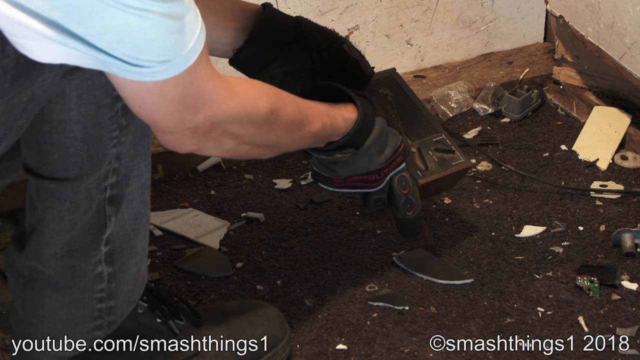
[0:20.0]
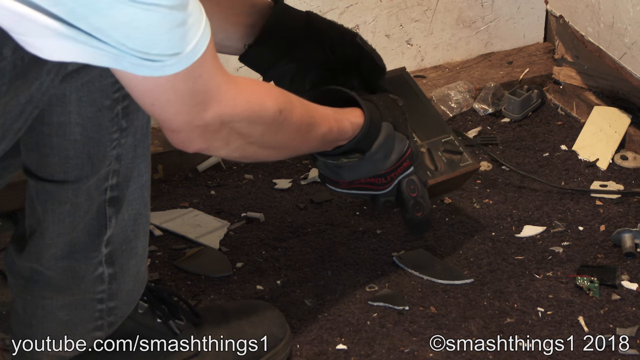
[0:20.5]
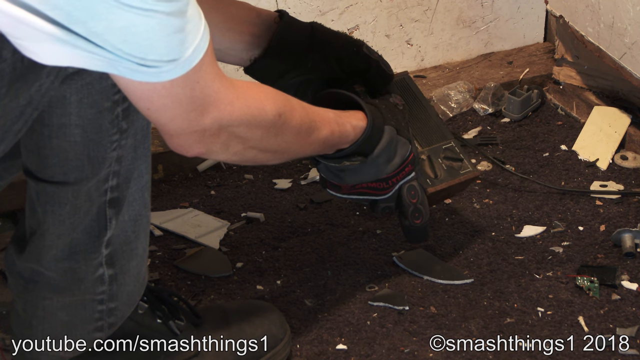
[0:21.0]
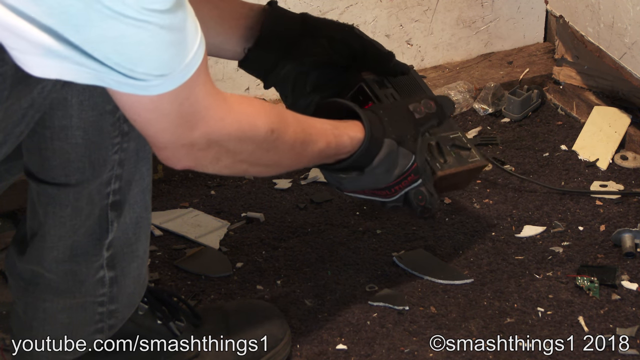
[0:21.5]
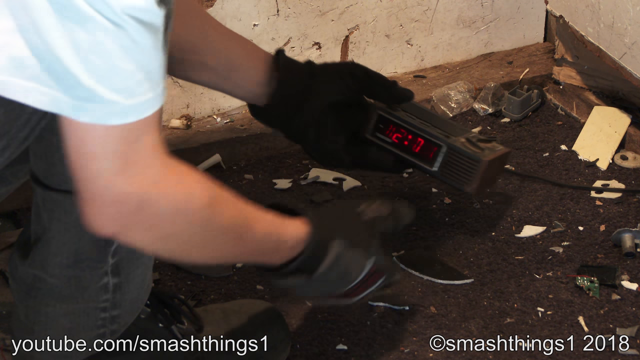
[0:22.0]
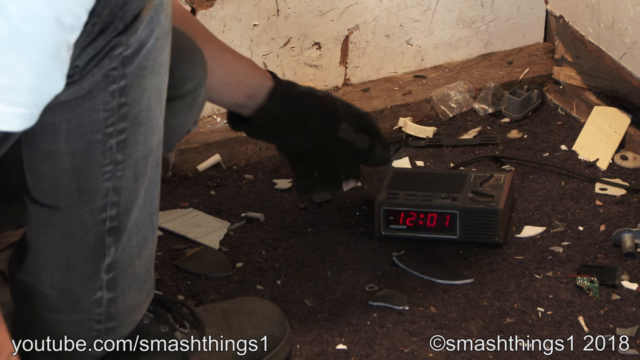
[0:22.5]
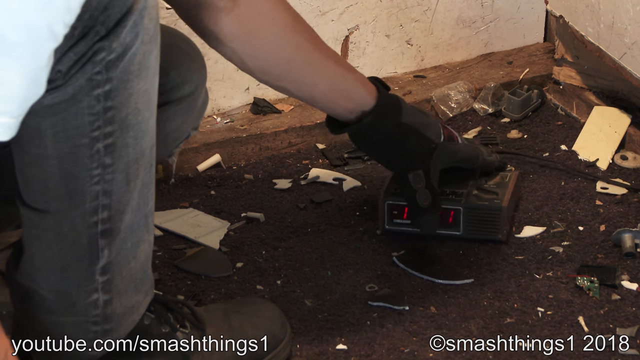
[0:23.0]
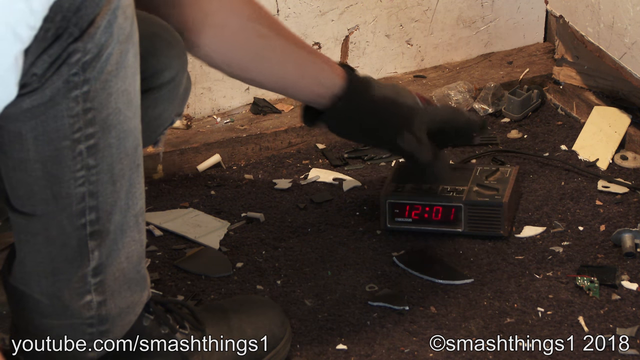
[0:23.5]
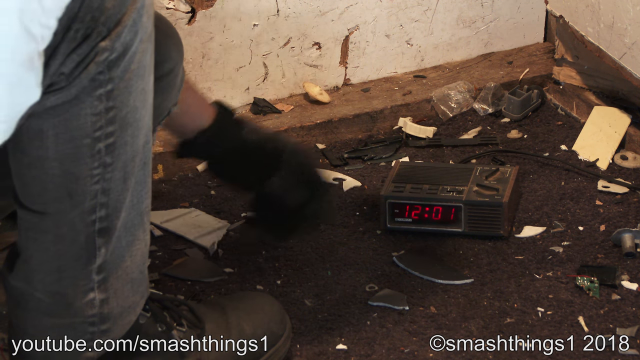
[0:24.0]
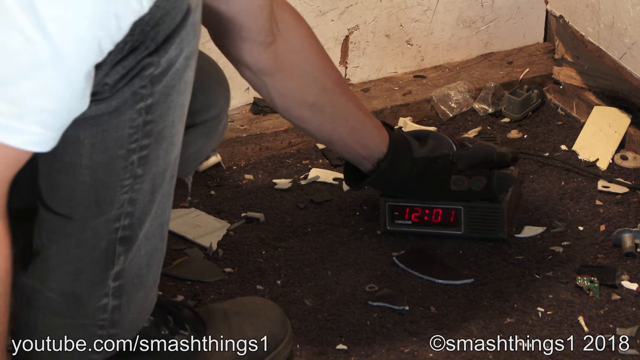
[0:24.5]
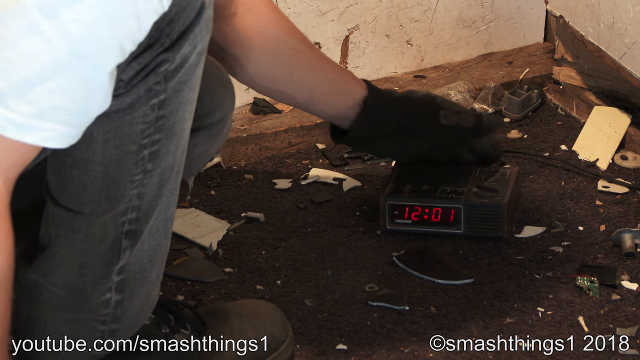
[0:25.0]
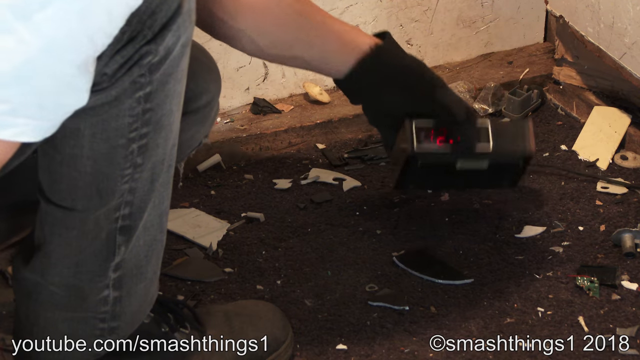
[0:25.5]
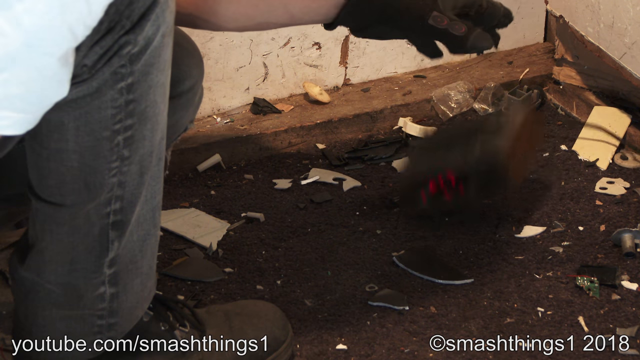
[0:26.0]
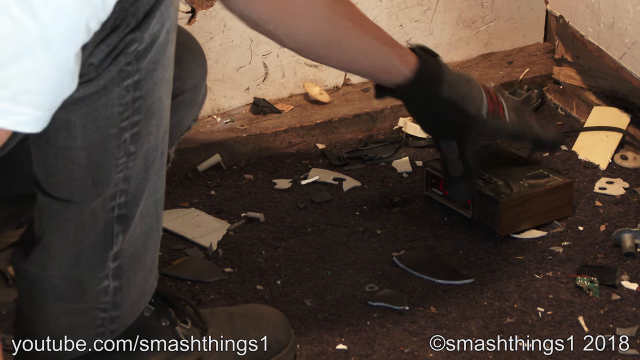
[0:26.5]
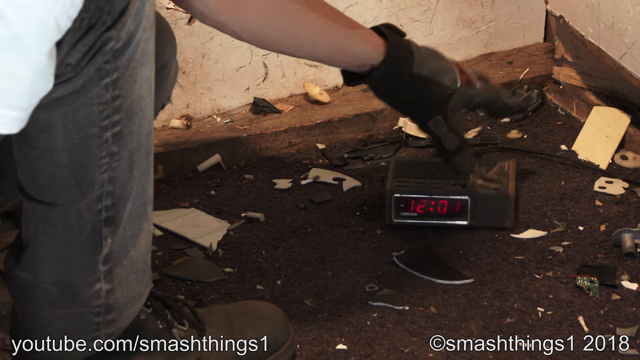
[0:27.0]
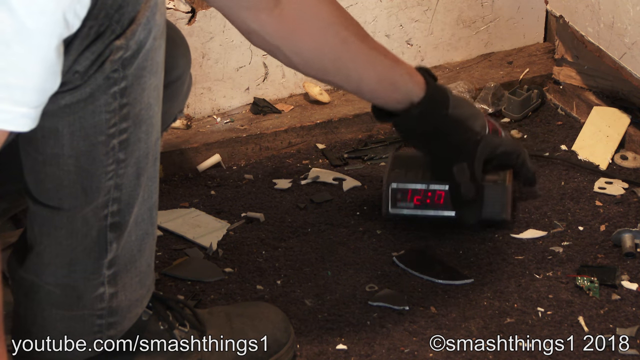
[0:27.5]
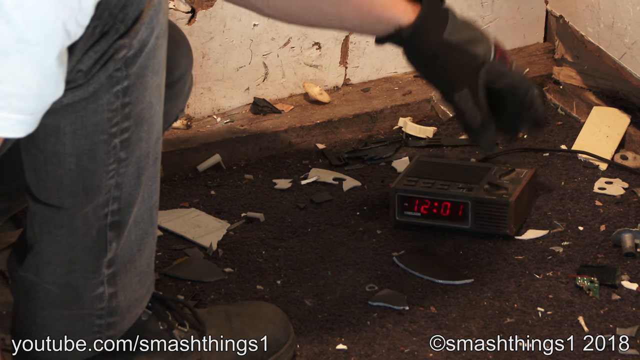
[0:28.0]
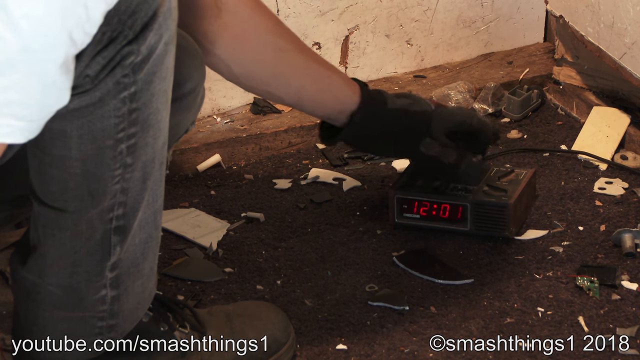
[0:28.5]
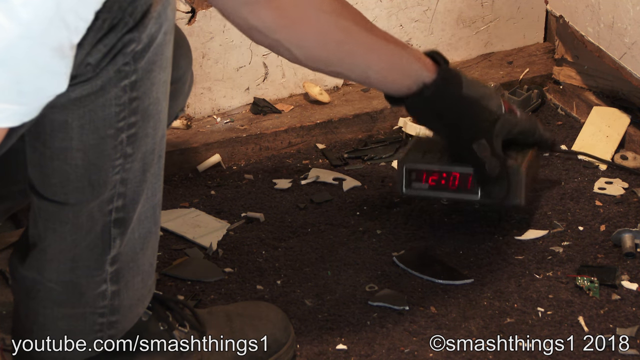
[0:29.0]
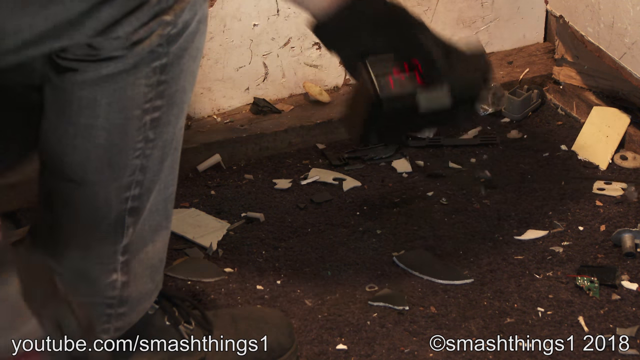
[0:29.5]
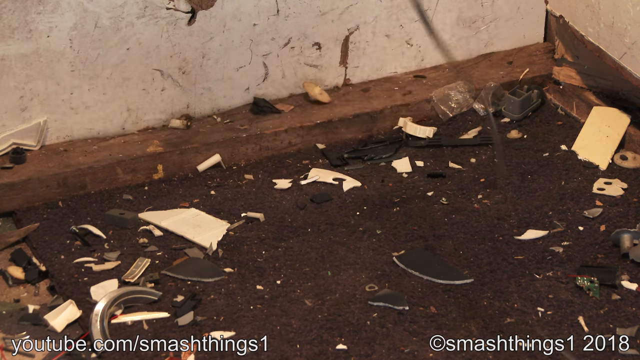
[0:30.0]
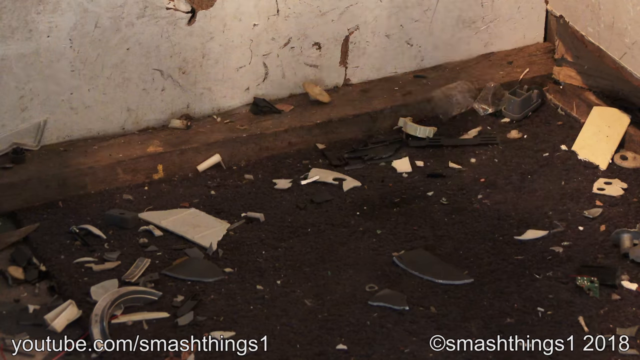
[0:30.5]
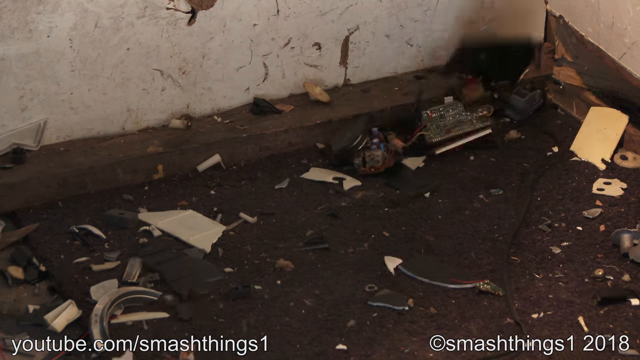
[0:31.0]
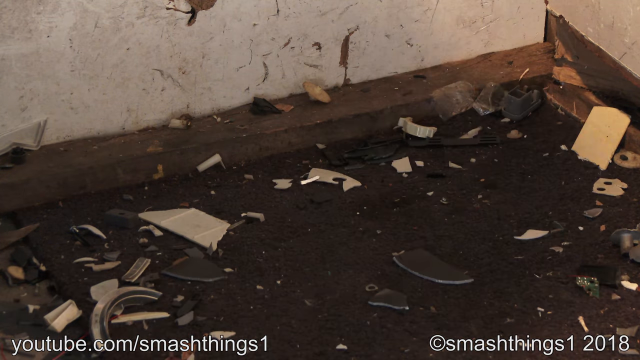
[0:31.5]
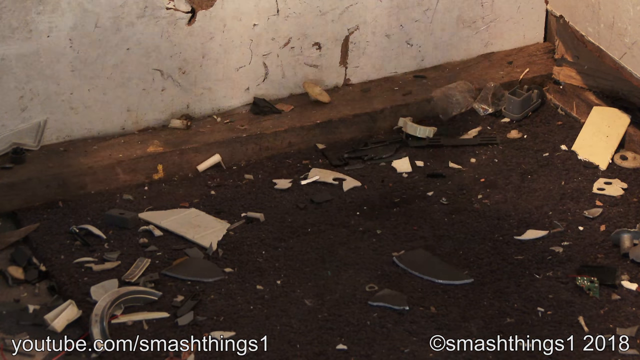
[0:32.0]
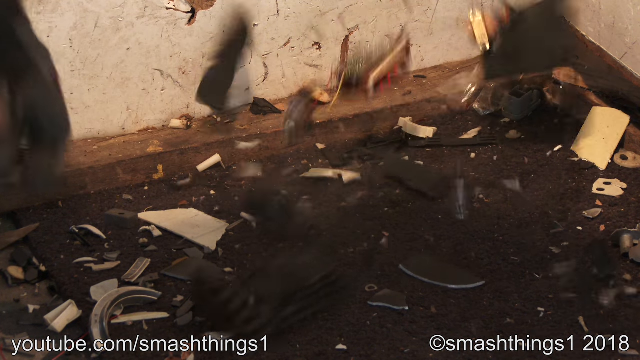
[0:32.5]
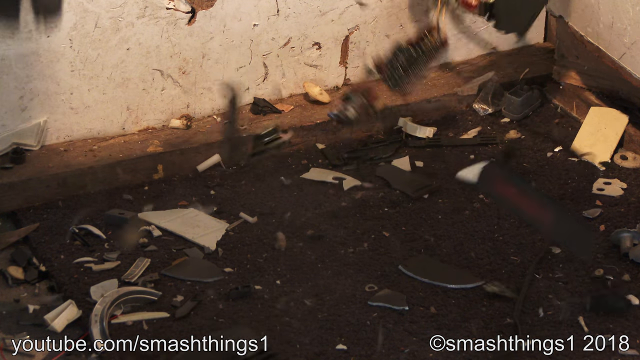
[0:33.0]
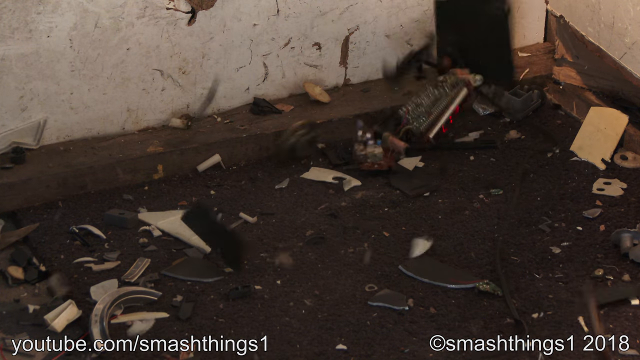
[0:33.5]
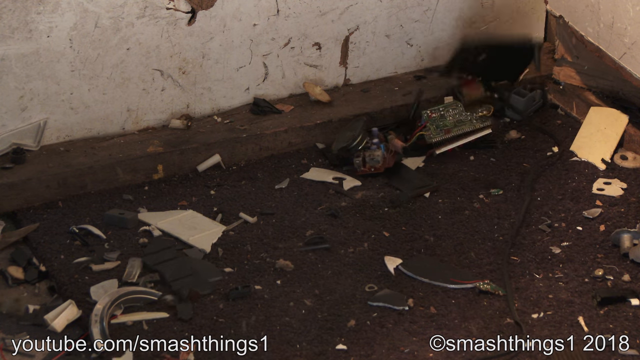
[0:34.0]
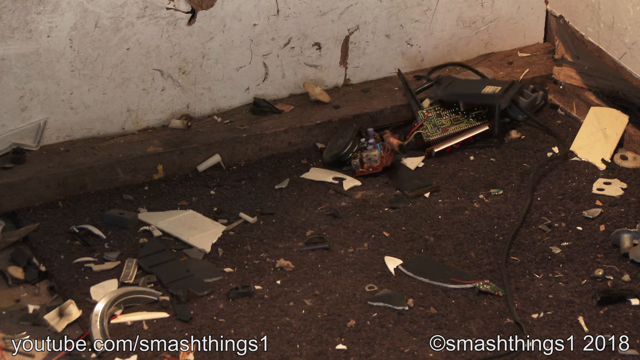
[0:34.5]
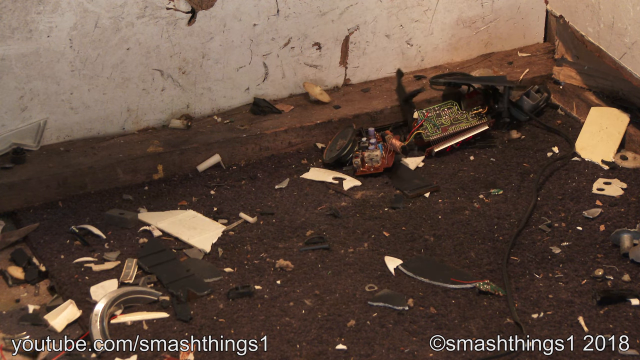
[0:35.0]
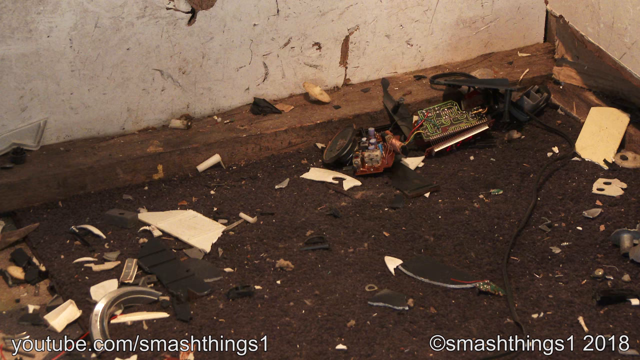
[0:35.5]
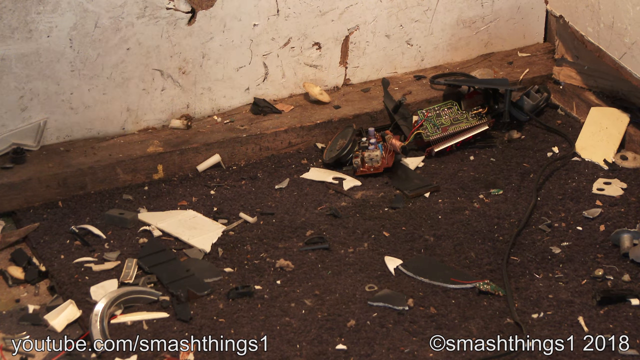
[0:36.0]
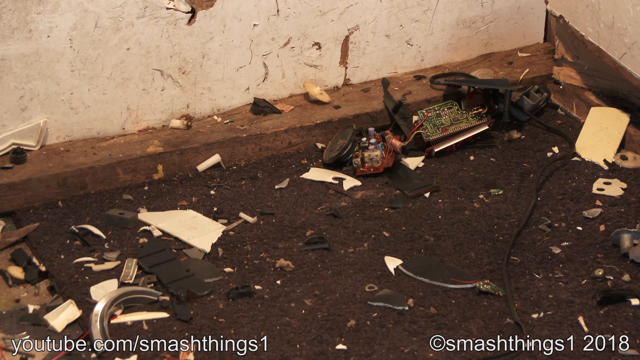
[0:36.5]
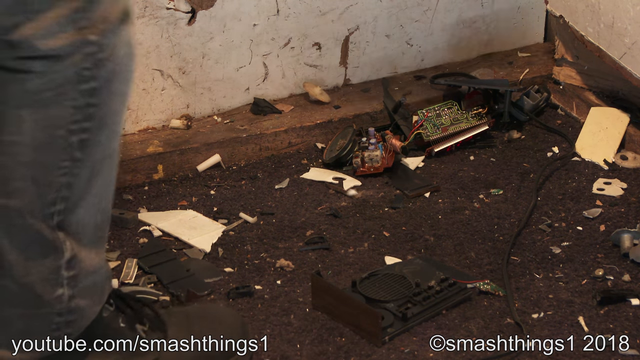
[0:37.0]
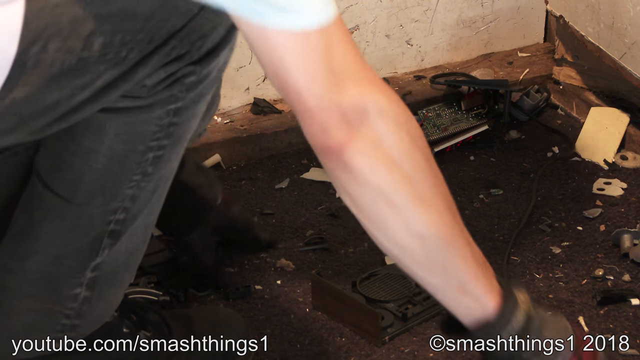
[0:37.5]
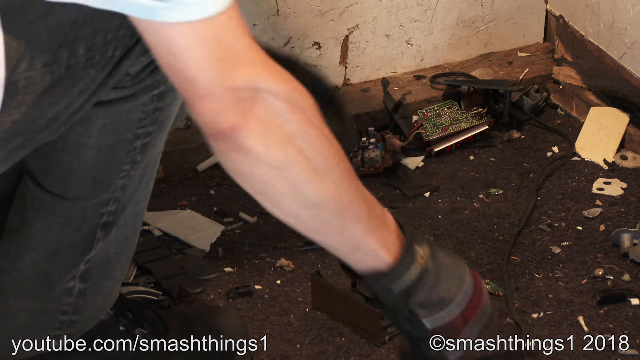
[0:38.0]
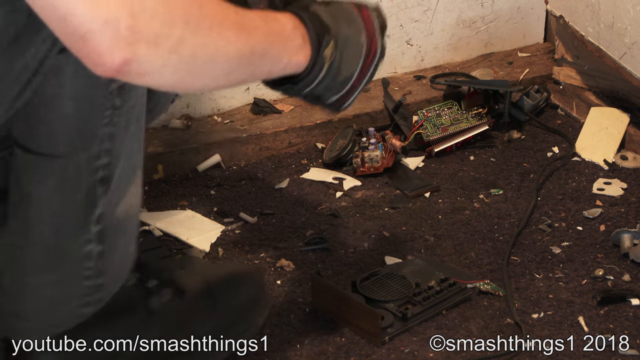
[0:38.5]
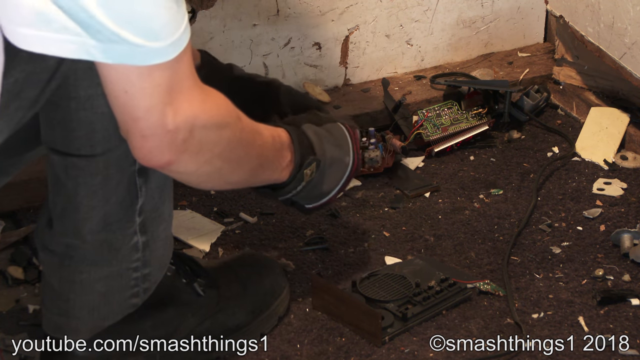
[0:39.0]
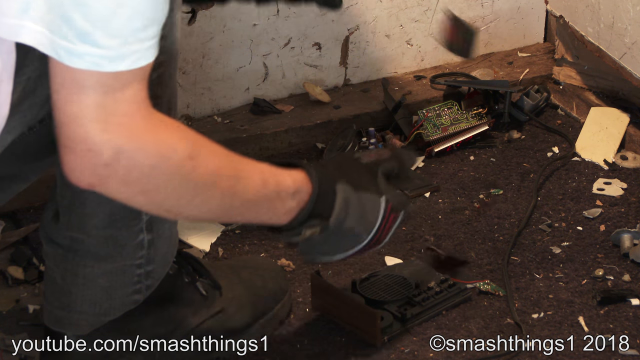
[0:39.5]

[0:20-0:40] A close-up shows a corner of a room with a dark floor littered with all sorts of materials, what look like pieces of metal, plastic and glass. A person in a white t-shirt is bending down on their knees; the arms possibly belong to a muscular man. The face is not visible, but the black gloves are, as the hands reach down to the ground, perhaps to pick up the debris. White text at the bottom of the screen reads "youtube.com smashthings1," and the lower right corner reads "smashthings2018." Bits and pieces are scattered around. The man picks up a digital clock and throws it down in a very hard, violent way, and it explodes on the ground.